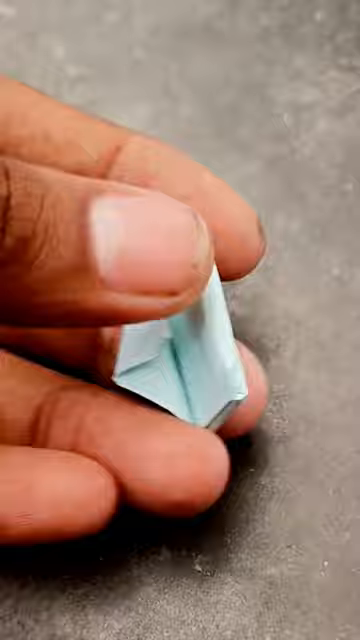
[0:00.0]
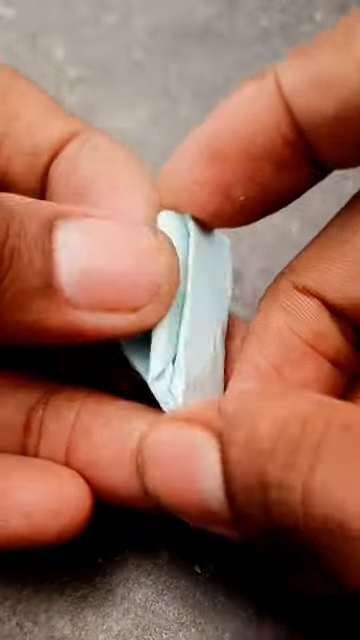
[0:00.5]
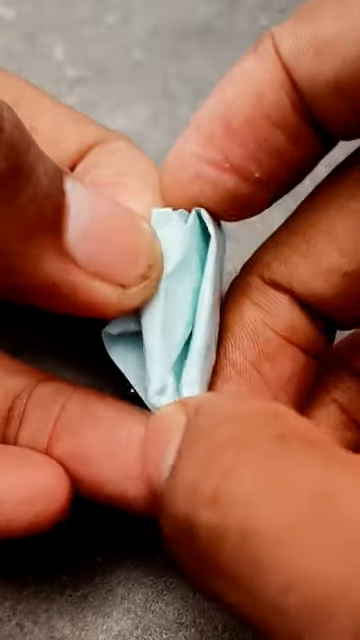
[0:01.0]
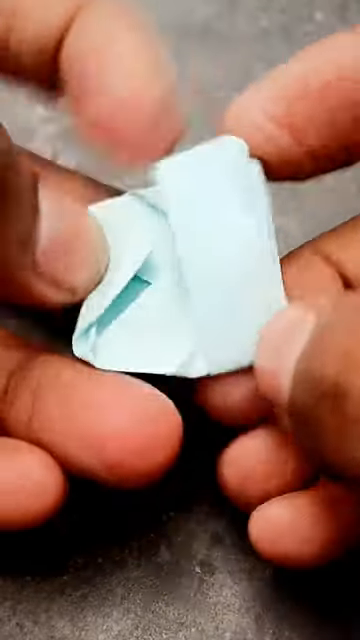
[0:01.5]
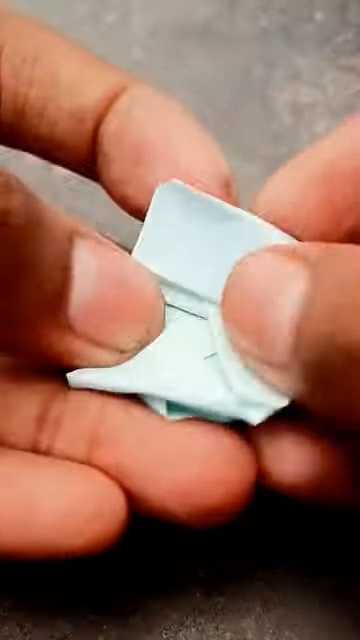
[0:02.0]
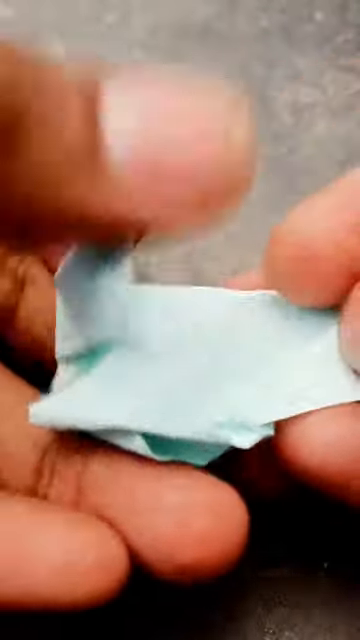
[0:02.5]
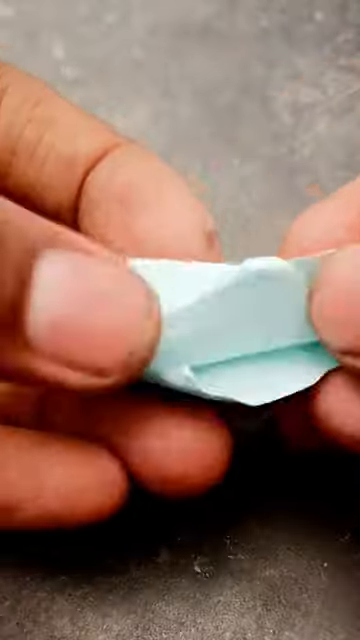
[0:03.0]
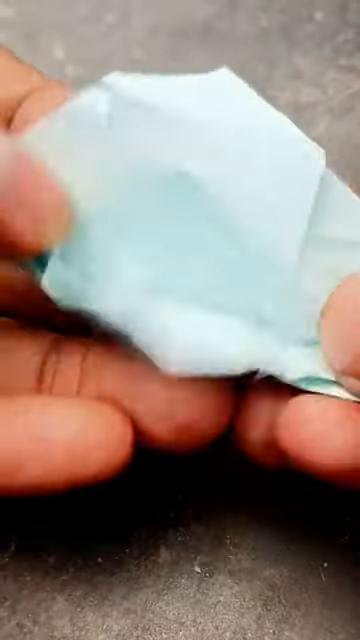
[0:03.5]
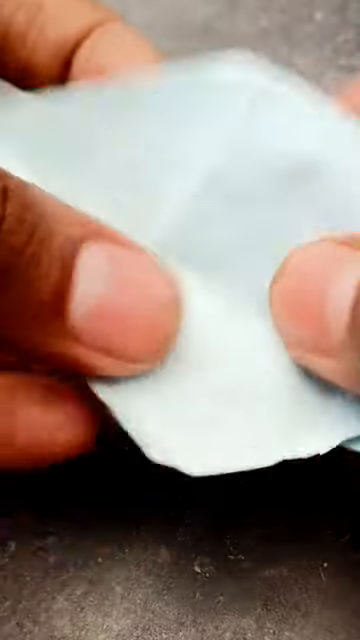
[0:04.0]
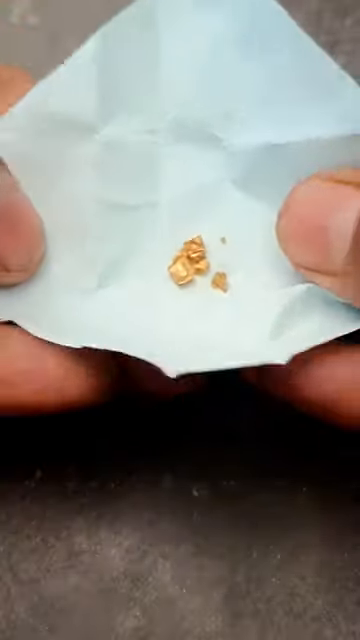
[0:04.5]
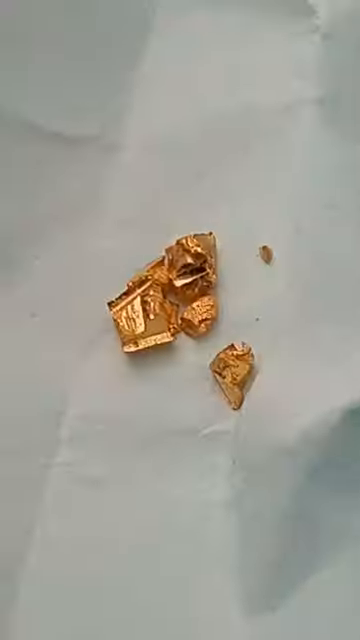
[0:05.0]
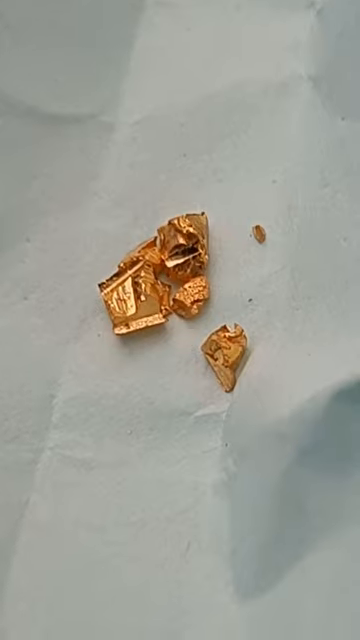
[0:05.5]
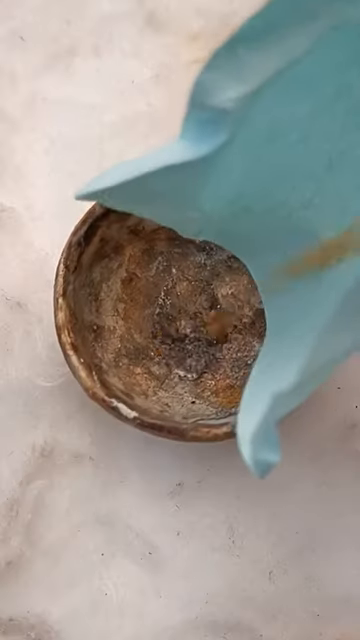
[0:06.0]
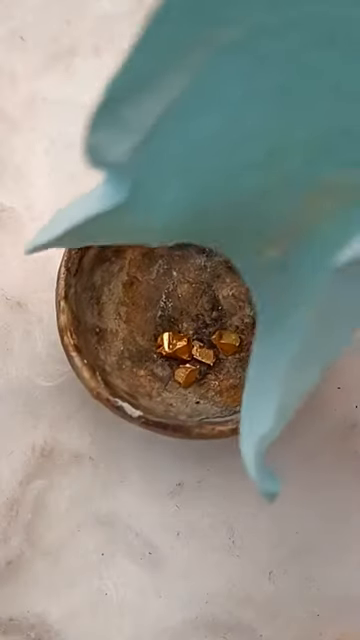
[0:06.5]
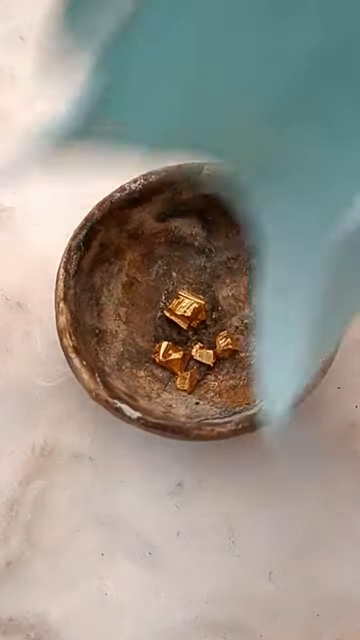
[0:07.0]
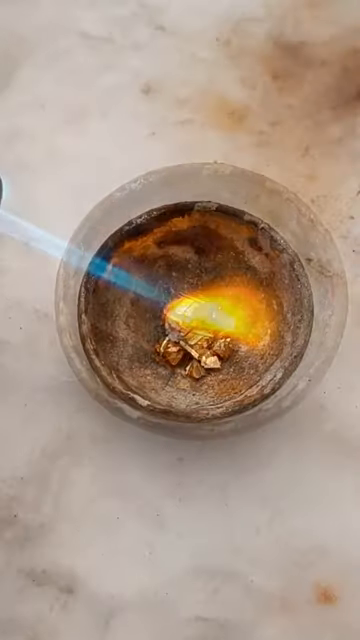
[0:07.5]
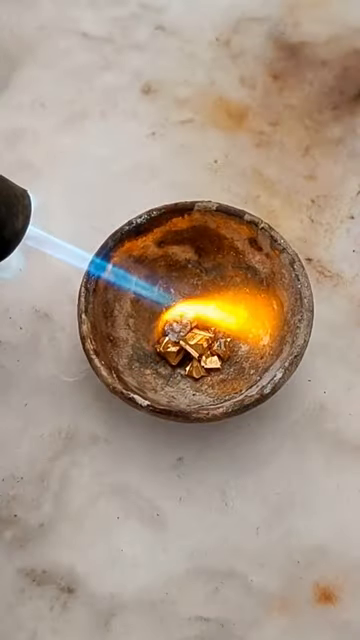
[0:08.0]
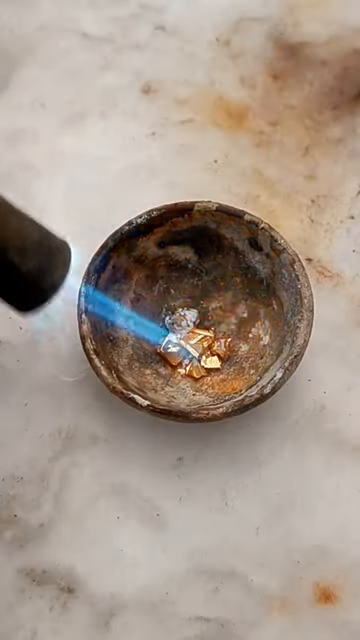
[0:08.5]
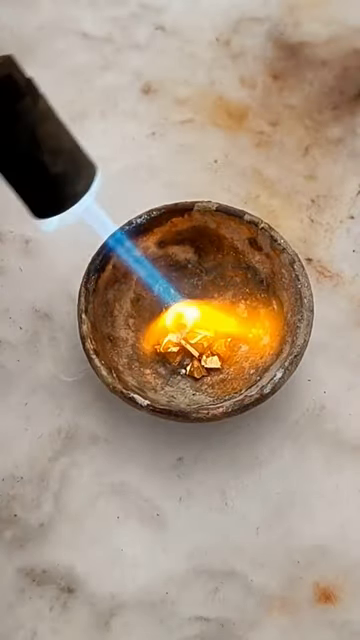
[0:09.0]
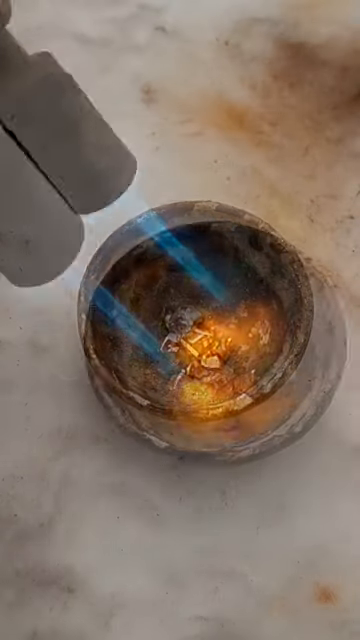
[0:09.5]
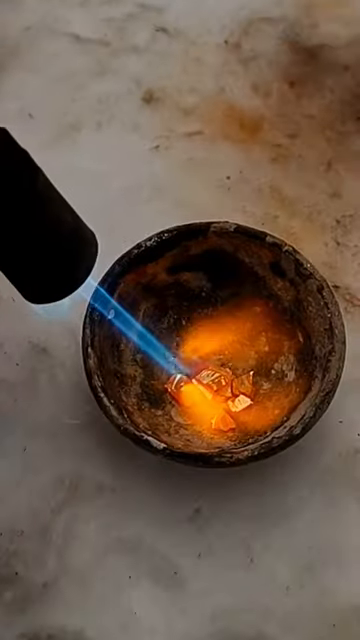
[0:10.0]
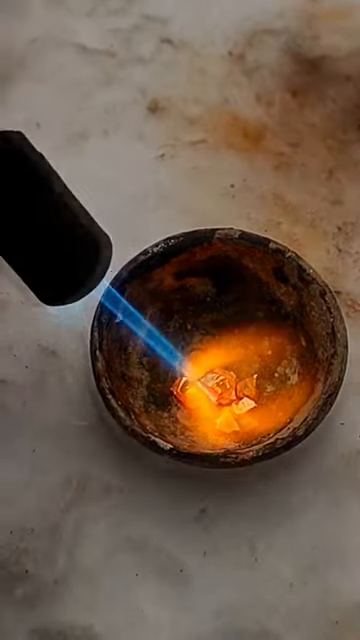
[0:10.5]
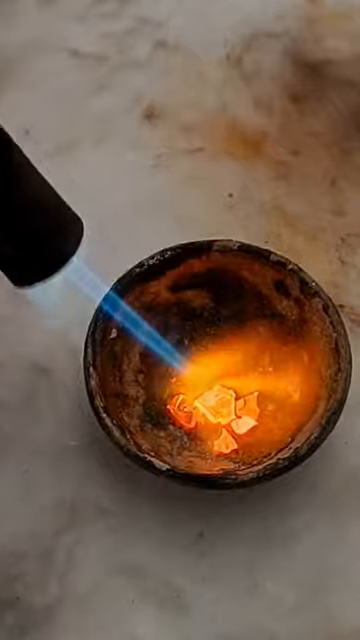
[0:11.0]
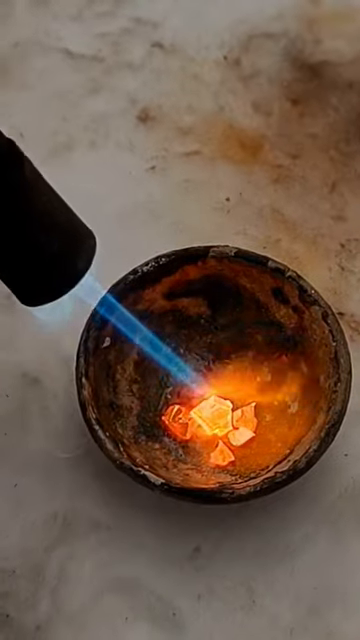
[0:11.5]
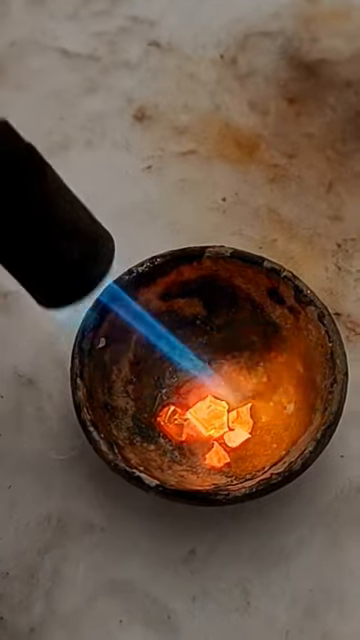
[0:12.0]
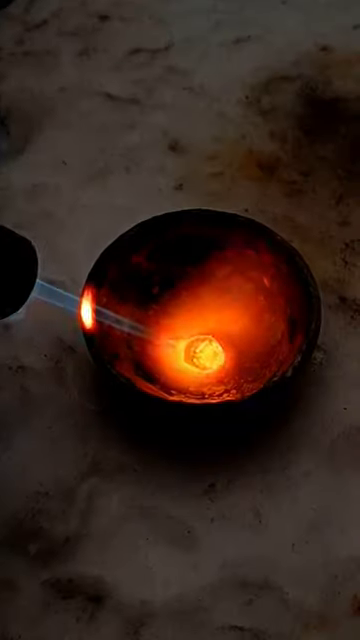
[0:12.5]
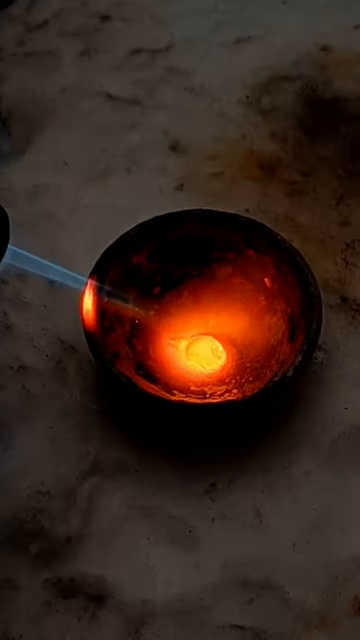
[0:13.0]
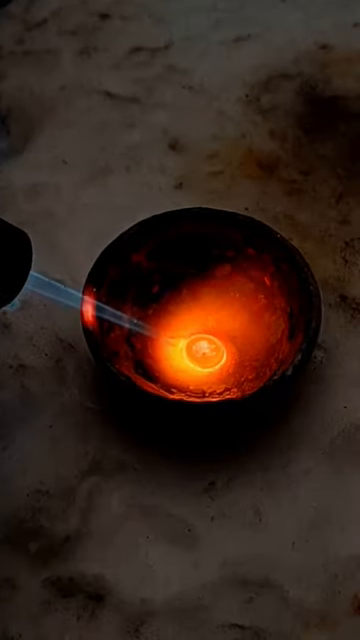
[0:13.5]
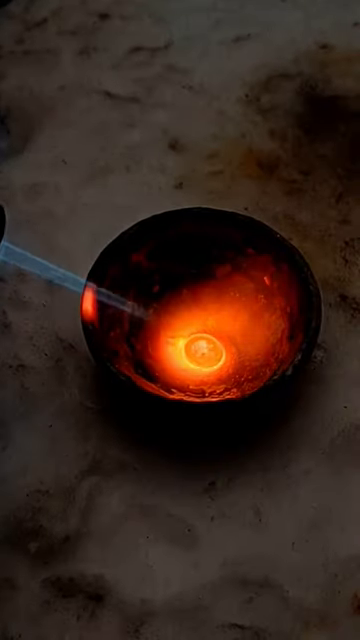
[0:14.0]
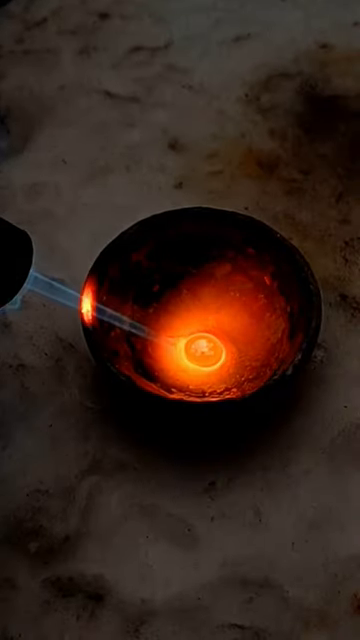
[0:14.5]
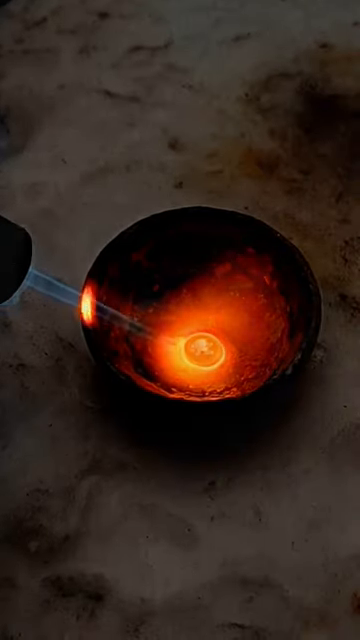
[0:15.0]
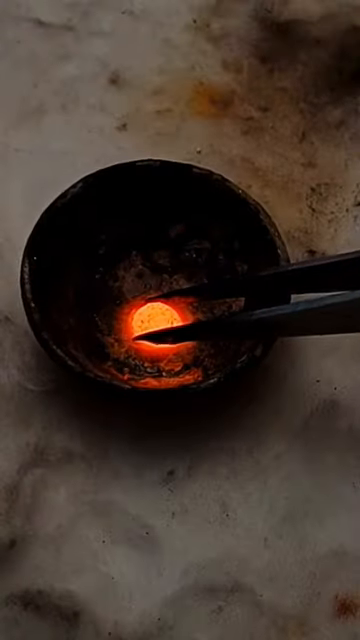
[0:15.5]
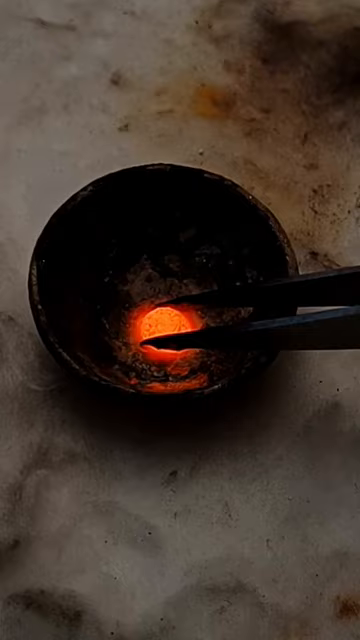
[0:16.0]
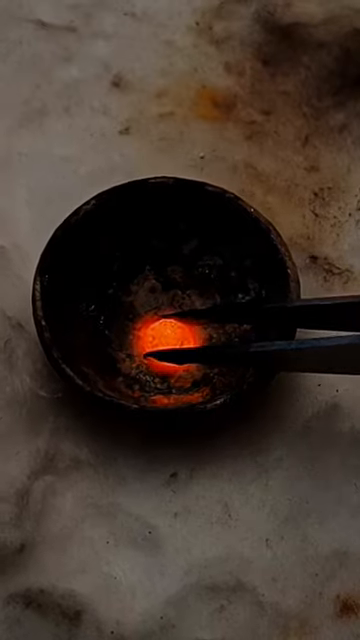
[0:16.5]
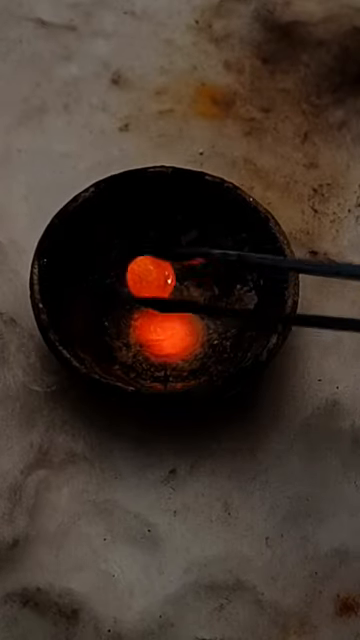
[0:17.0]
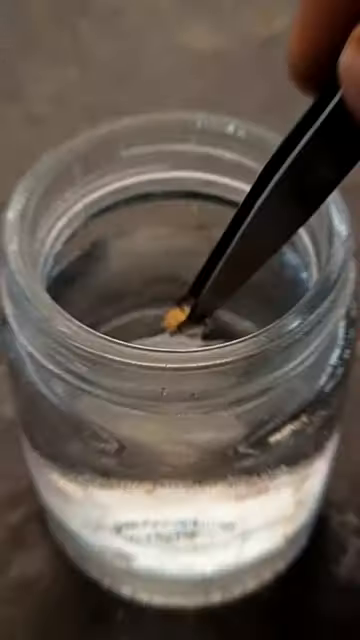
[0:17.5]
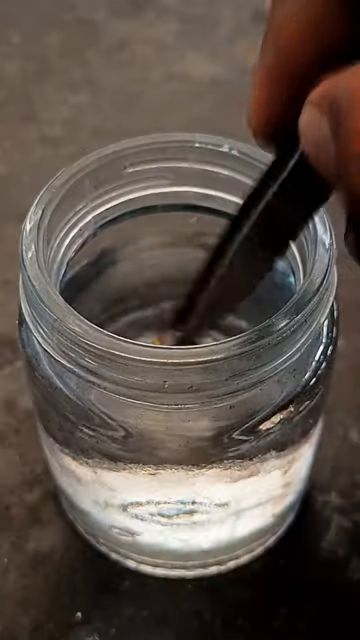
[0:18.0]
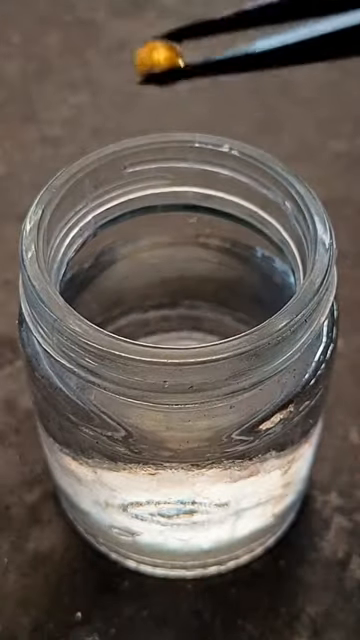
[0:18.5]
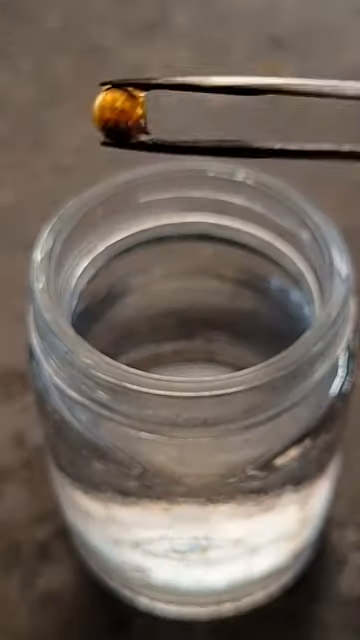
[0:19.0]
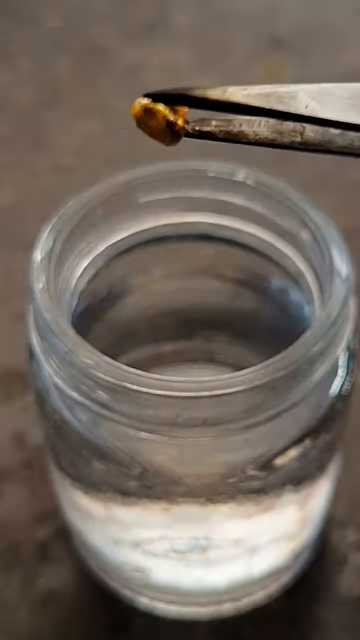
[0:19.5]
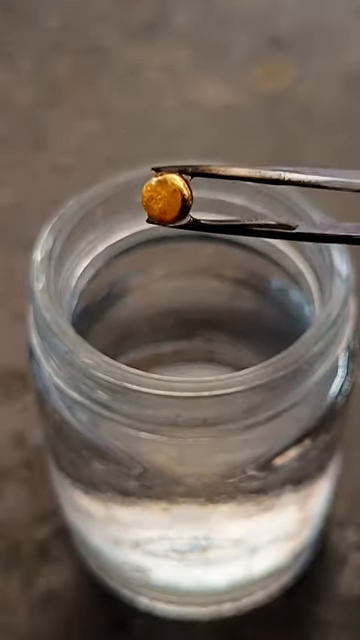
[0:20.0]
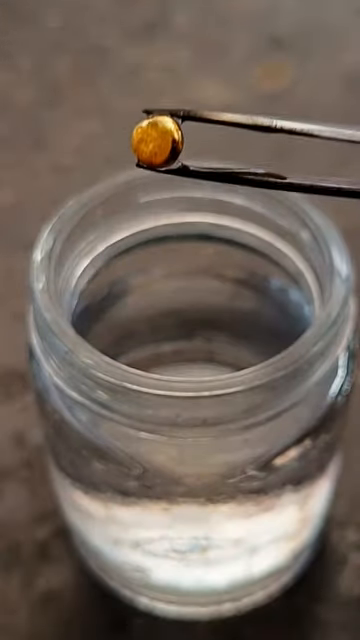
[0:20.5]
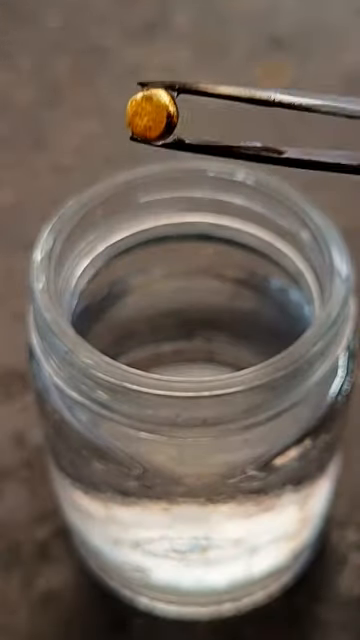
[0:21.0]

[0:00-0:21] A person opens a piece of paper holding one gram of gold, which is very small. He puts the specks of gold into a little pot, apparently made of clay, and melts them with fire that shoots out of a nozzle. The gold is burned down until it is bright red. He picks up the piece of gold with tweezers and puts it into water in a clear mason jar to cool it off. The gold is now a small nugget.